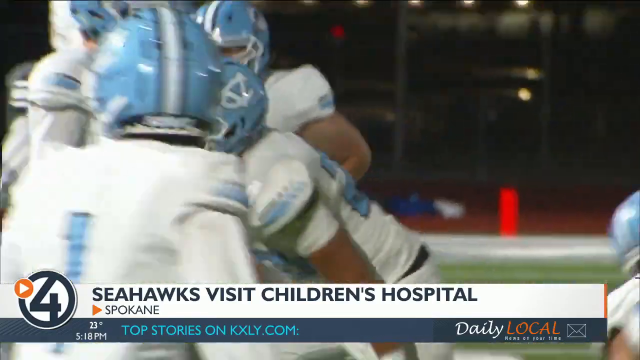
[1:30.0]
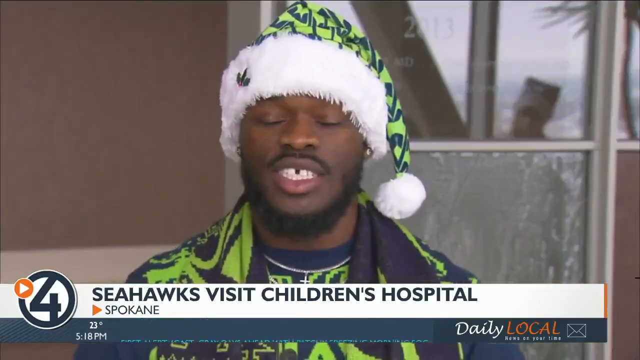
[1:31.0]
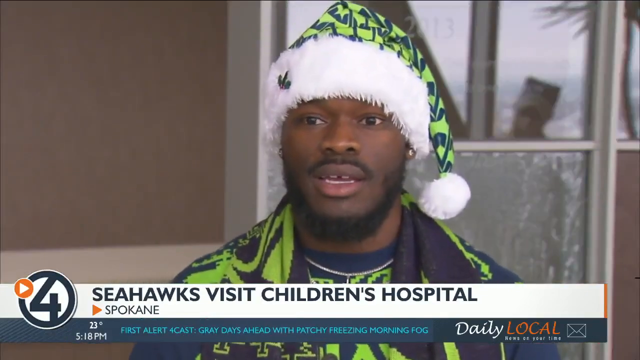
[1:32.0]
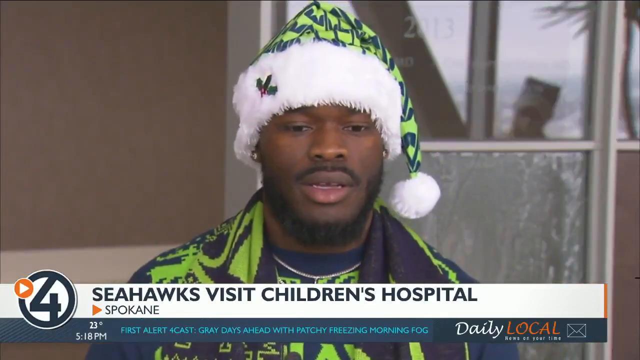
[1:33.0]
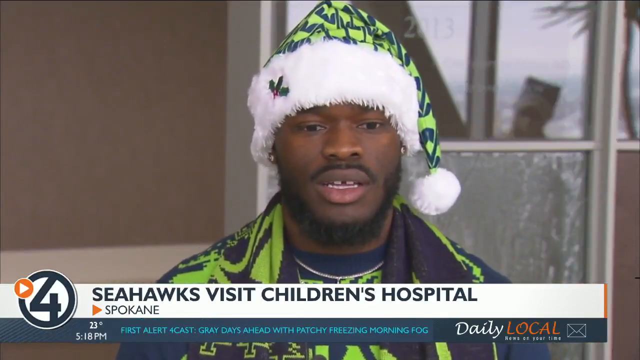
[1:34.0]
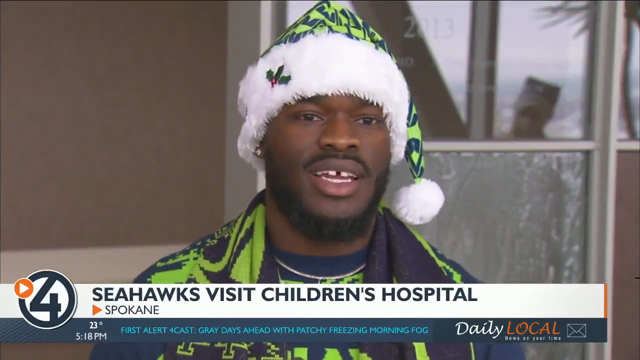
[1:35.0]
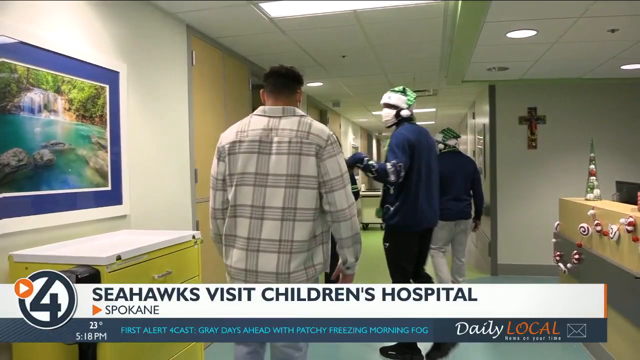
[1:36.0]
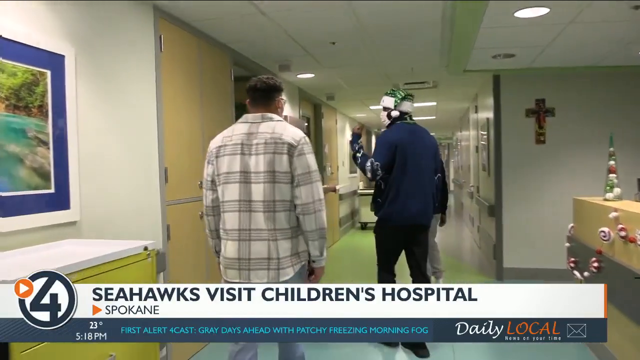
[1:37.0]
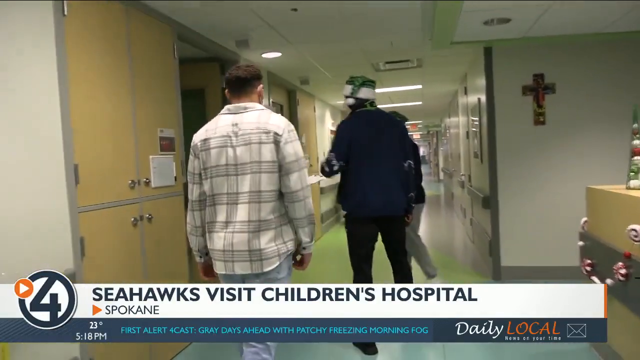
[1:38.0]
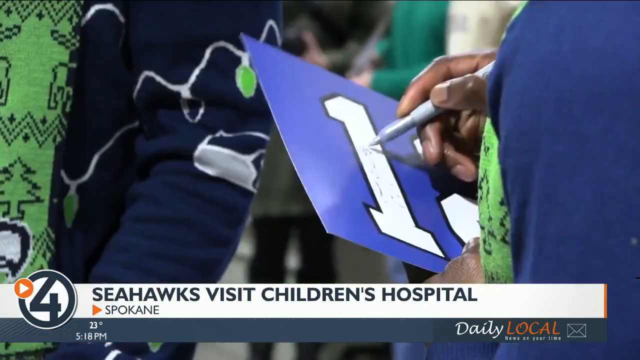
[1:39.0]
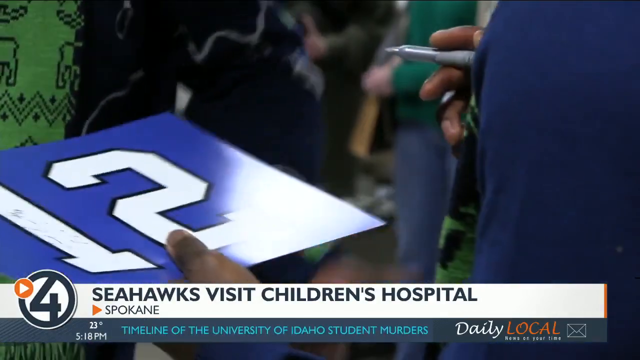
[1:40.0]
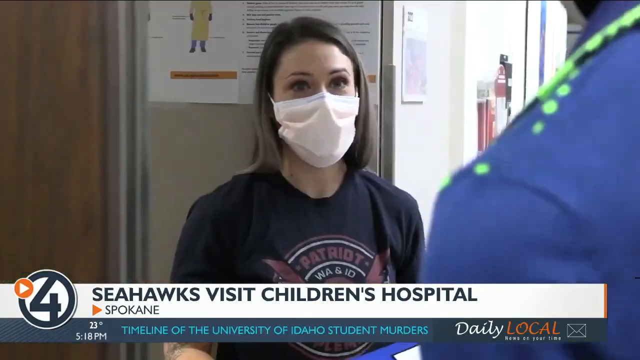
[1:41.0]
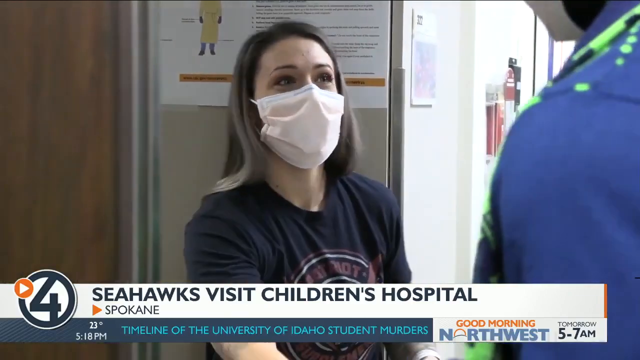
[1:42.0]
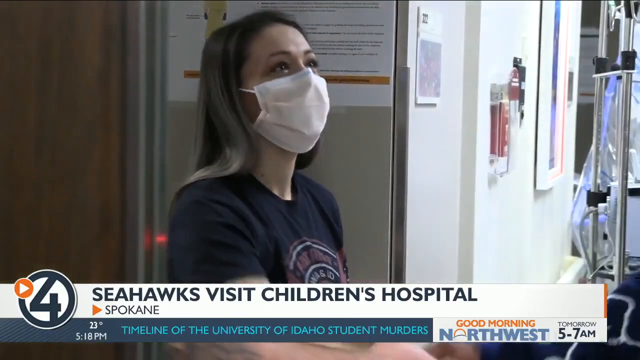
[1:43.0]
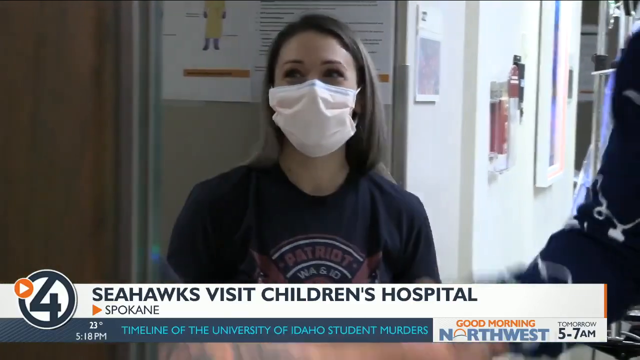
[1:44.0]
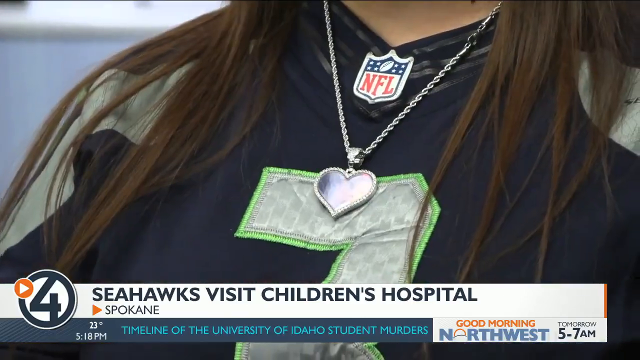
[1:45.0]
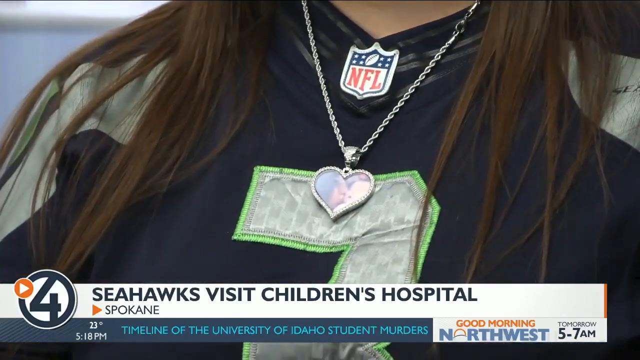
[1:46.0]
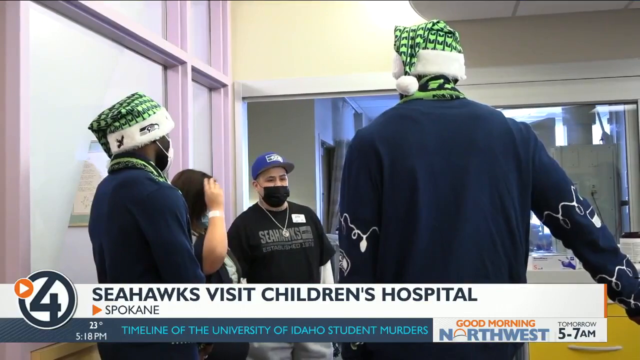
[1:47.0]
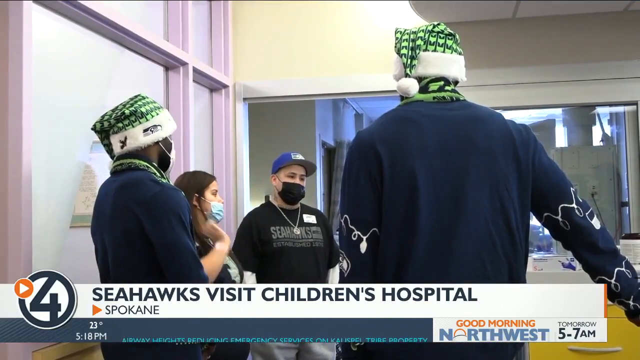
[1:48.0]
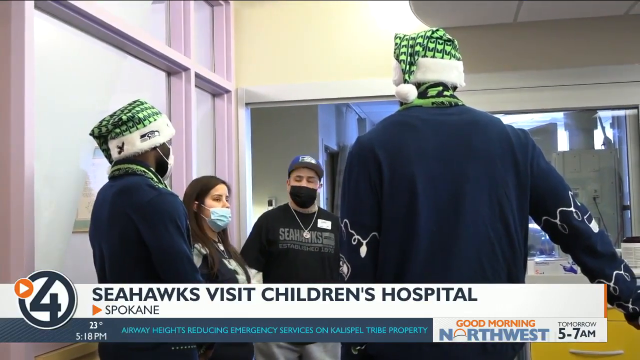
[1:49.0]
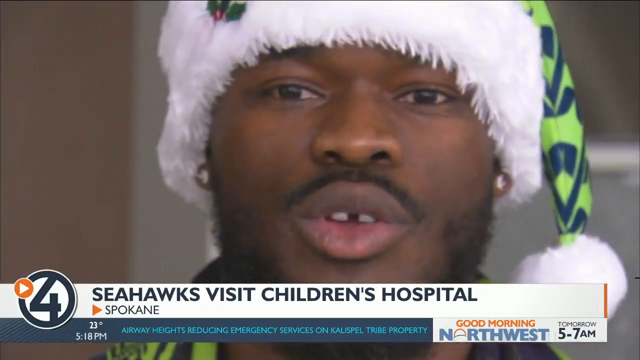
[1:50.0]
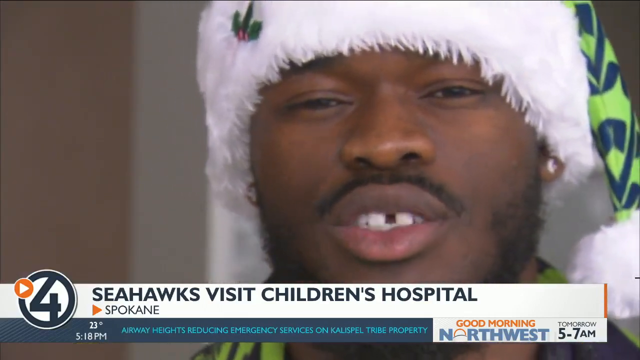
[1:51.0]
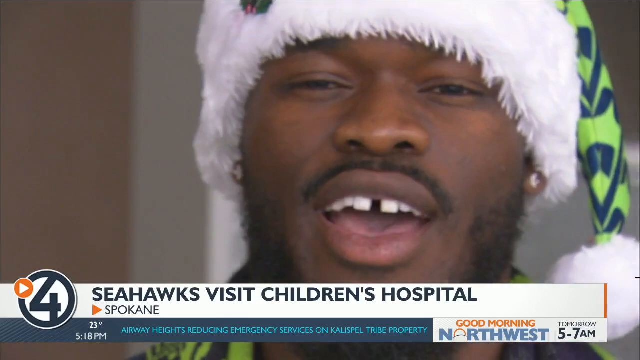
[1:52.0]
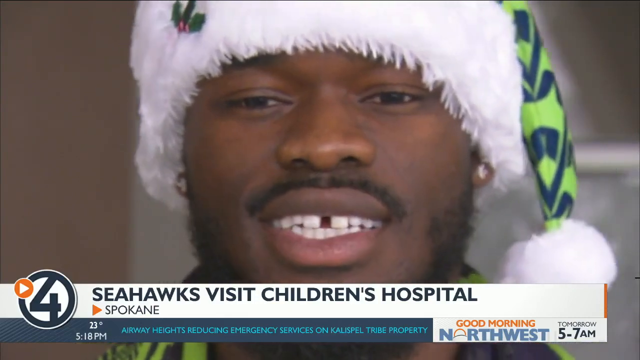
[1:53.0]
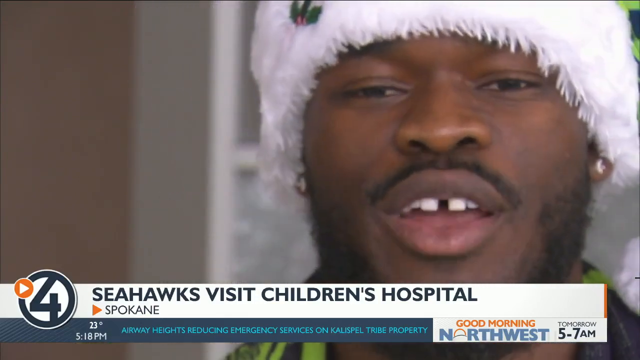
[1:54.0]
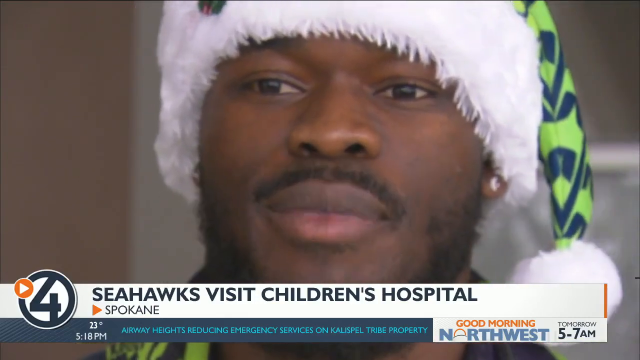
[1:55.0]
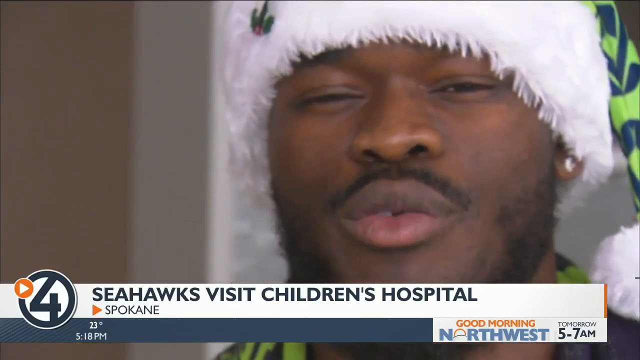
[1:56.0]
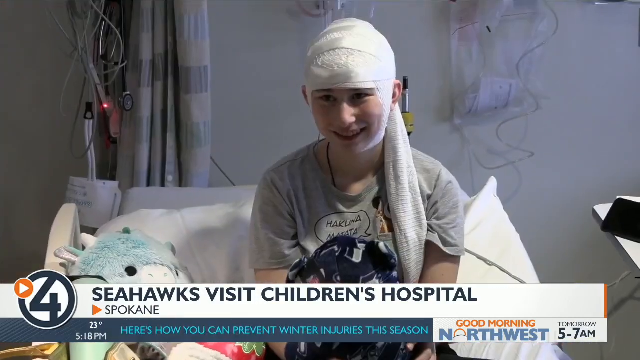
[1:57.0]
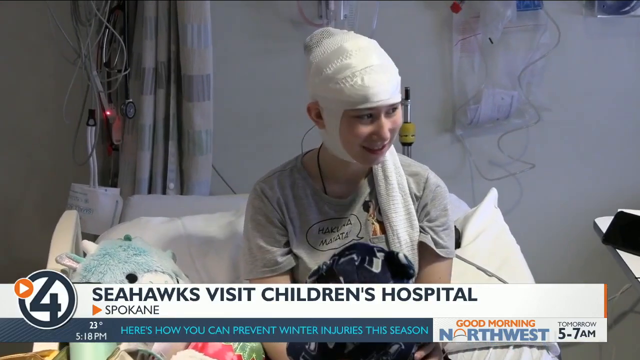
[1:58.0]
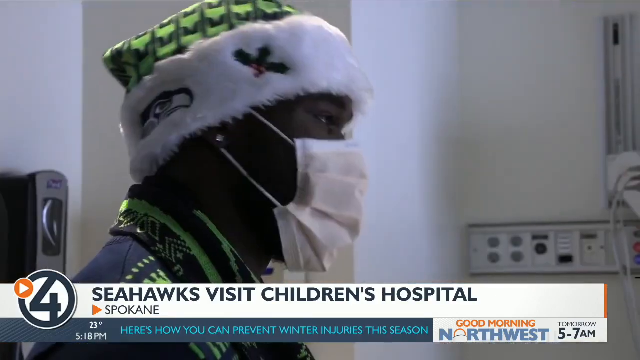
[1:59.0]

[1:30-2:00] One of the probable Seattle Seahawks players speaks on camera again in an interview. He is seen walking down the hospital hallway with the young man who was interviewed earlier. He is then shown speaking with a young lady wearing a protective mask, with long dark hair and a dark t-shirt. She shakes his hand, and the video proceeds to another young lady with long dark hair wearing a Seattle Seahawks jersey with the number 7 and a necklace with a heart-shaped mirror. Two of the football players talk with some of the visitors in a hospital room; they are all wearing protective masks. The interview with the first football player continues. Finally, the football player is shown with the child in a bed who was presented with the gift earlier.